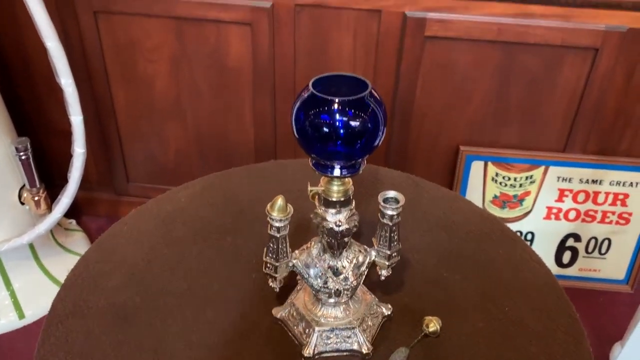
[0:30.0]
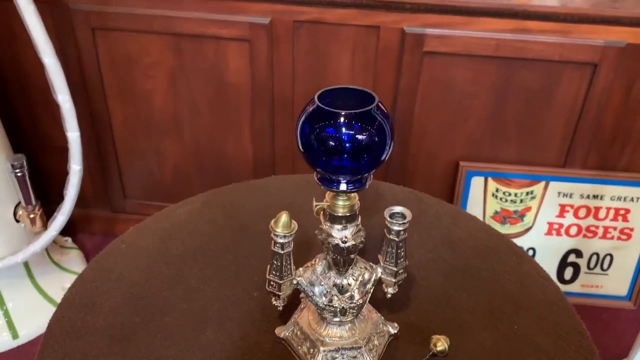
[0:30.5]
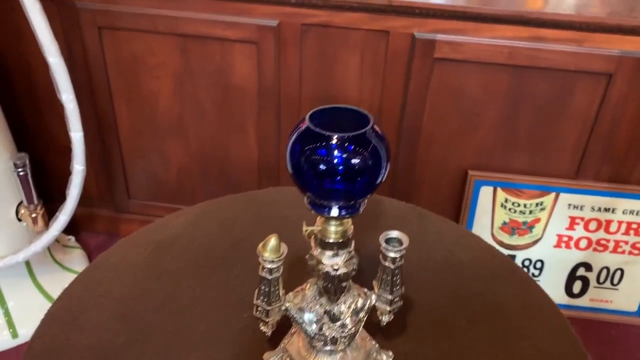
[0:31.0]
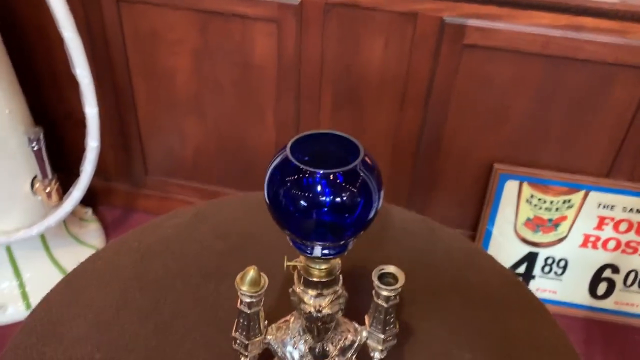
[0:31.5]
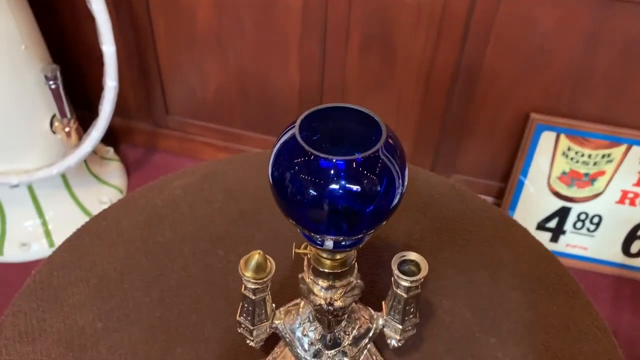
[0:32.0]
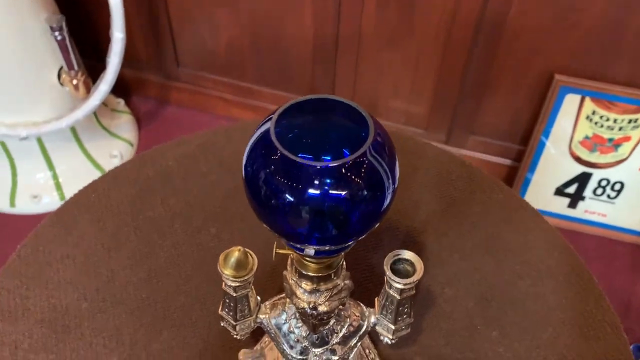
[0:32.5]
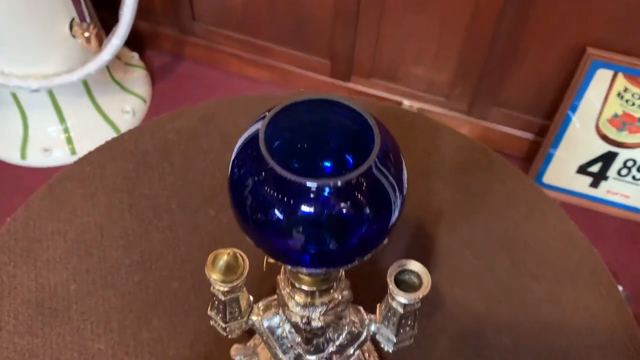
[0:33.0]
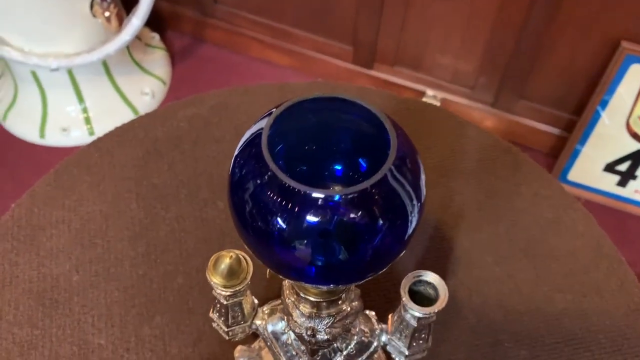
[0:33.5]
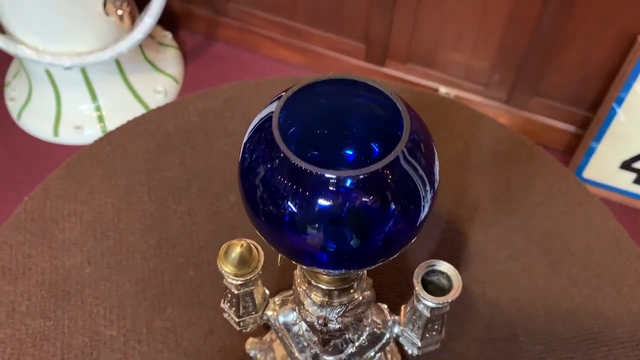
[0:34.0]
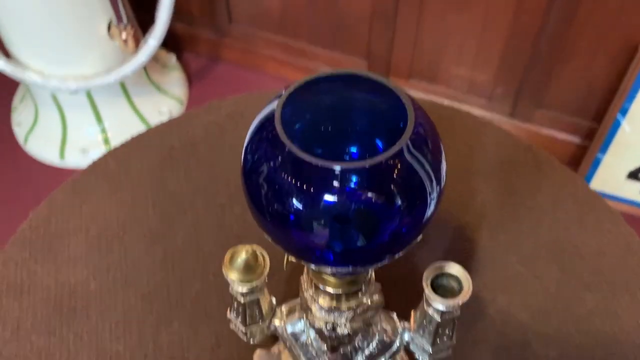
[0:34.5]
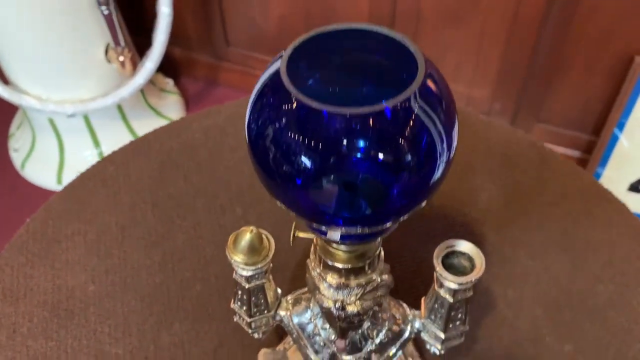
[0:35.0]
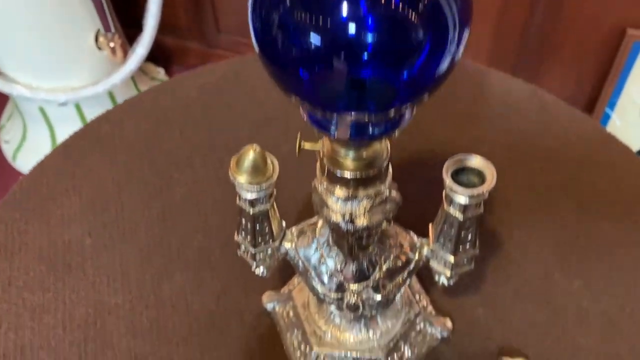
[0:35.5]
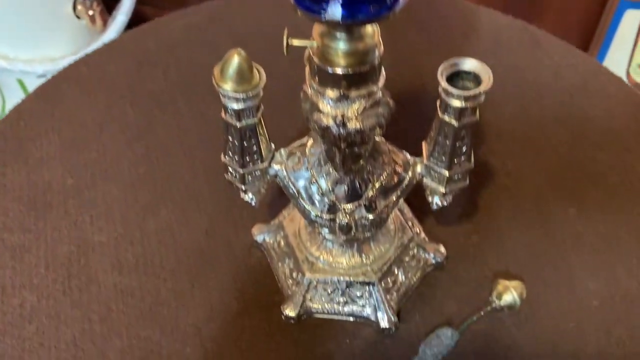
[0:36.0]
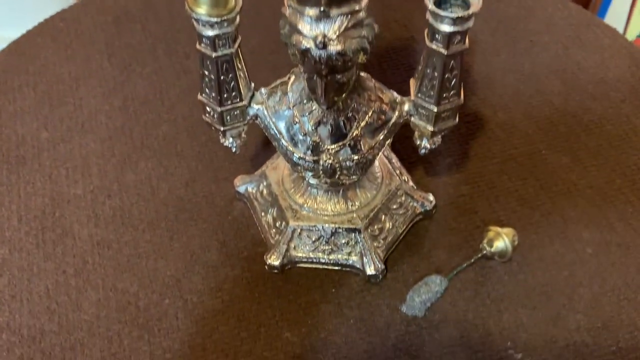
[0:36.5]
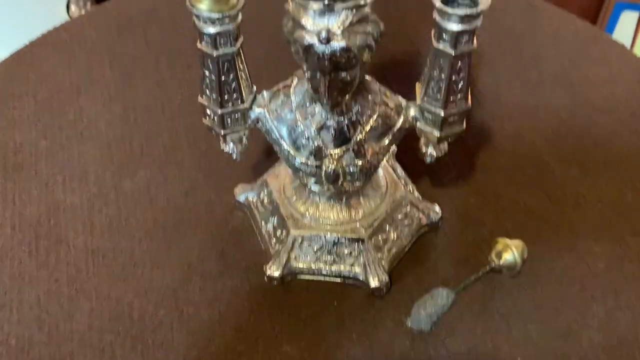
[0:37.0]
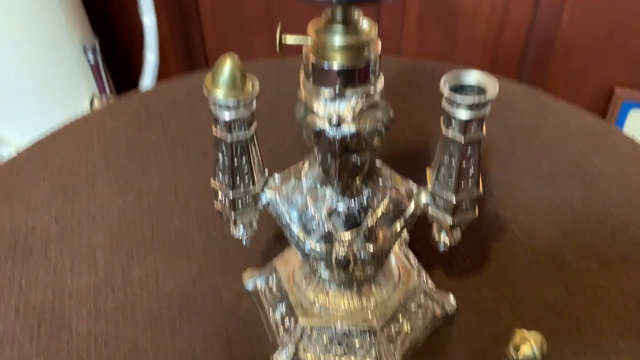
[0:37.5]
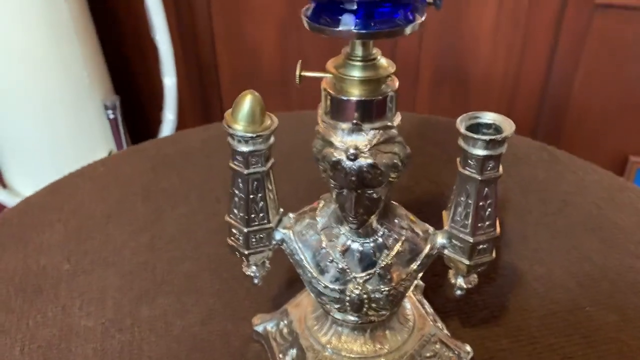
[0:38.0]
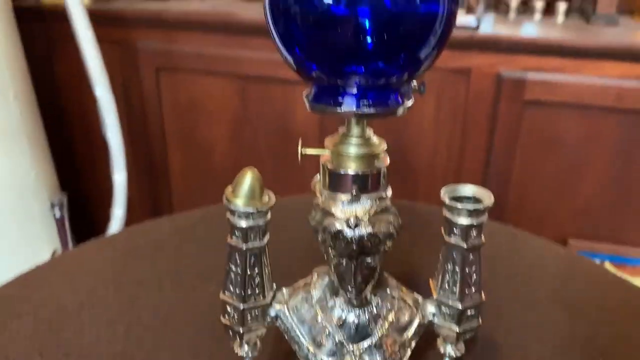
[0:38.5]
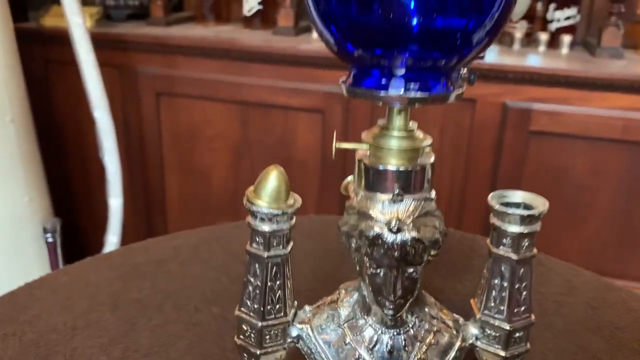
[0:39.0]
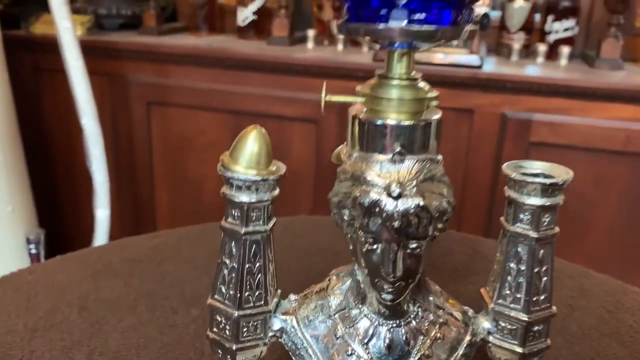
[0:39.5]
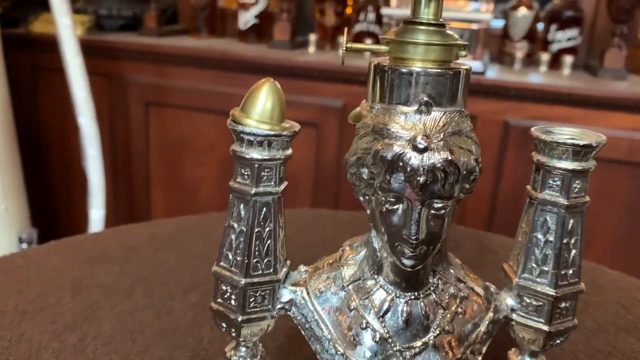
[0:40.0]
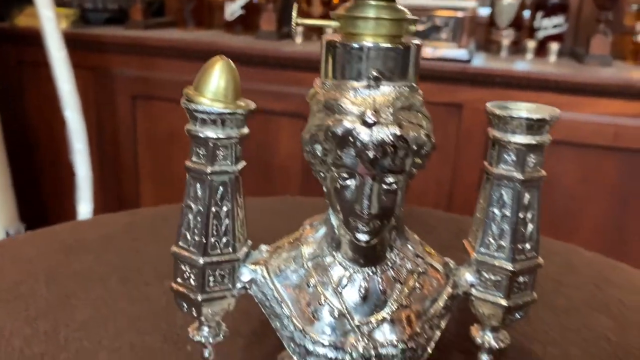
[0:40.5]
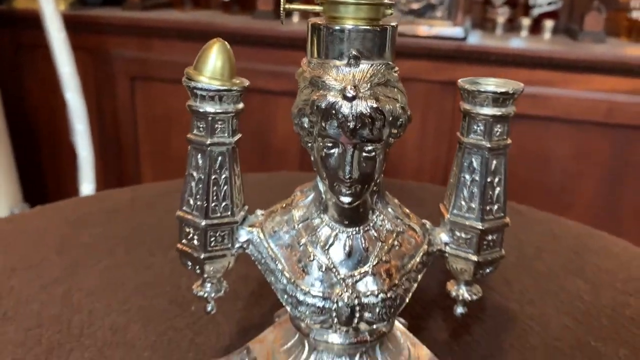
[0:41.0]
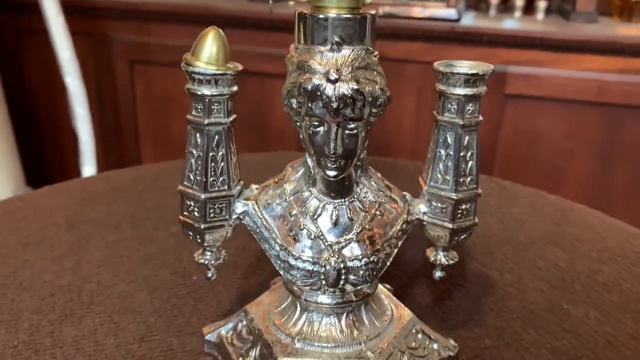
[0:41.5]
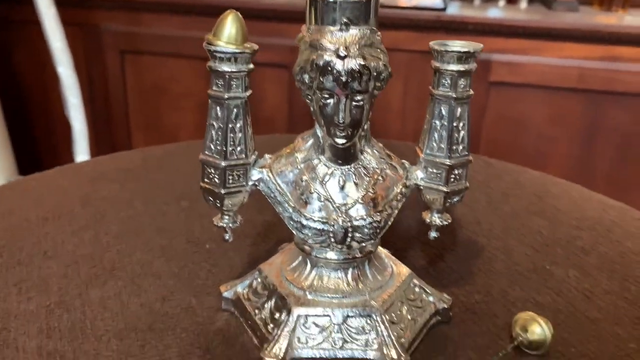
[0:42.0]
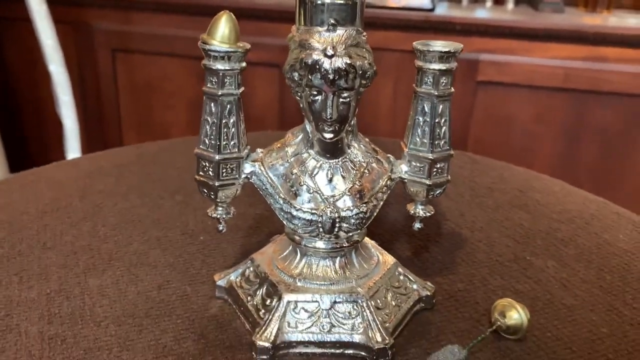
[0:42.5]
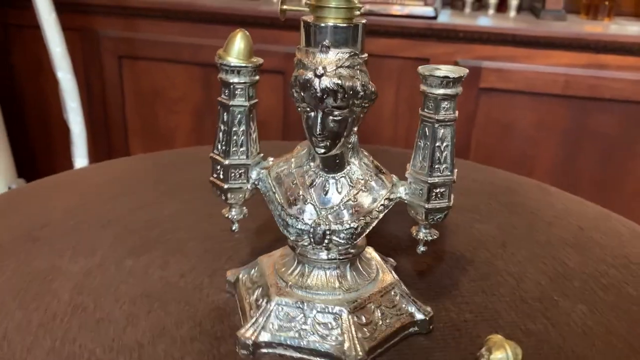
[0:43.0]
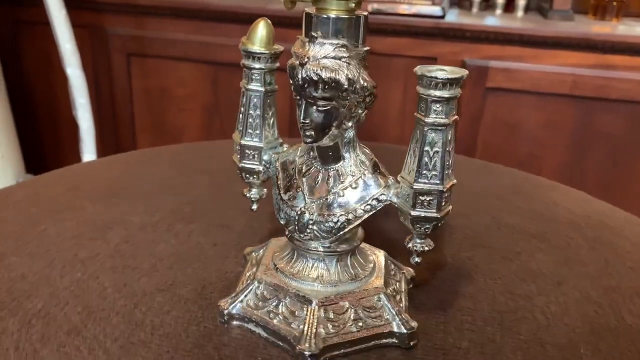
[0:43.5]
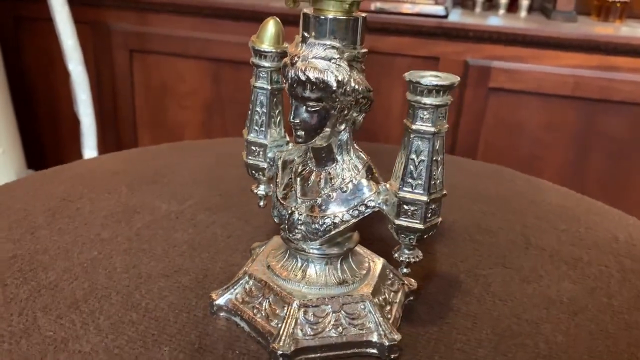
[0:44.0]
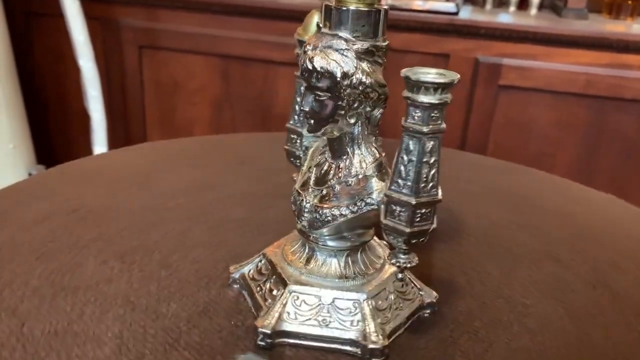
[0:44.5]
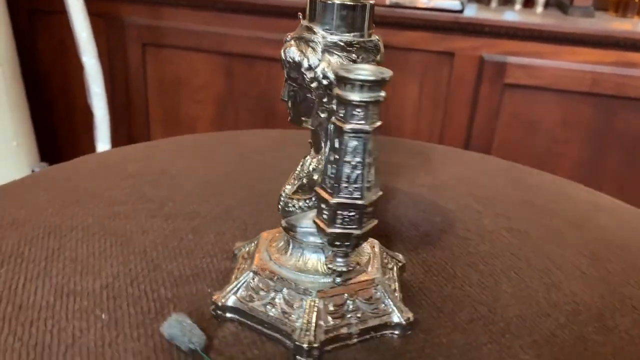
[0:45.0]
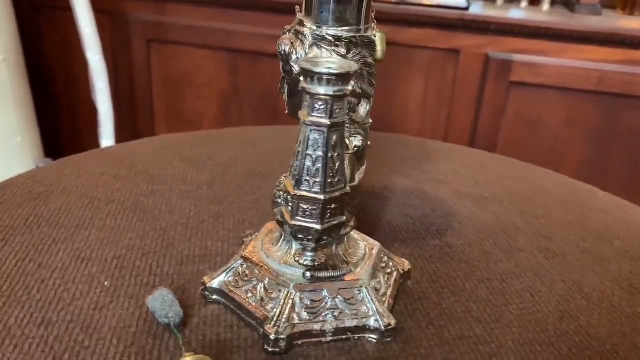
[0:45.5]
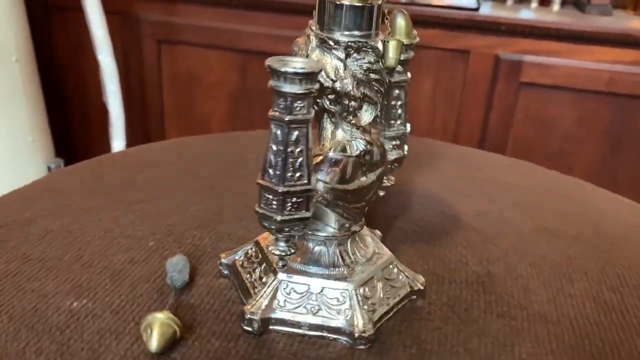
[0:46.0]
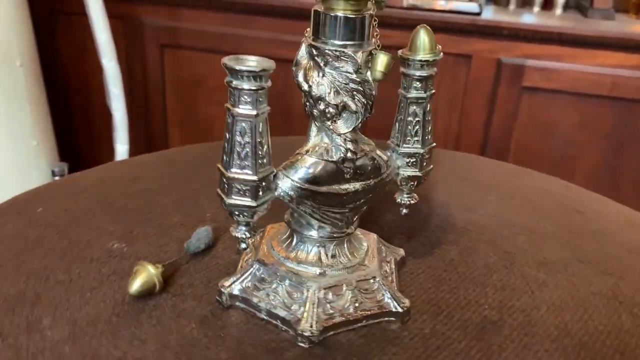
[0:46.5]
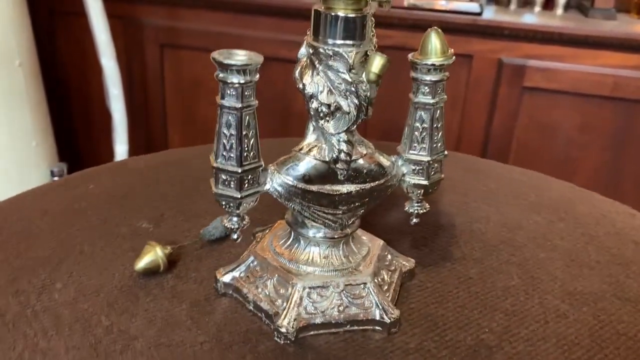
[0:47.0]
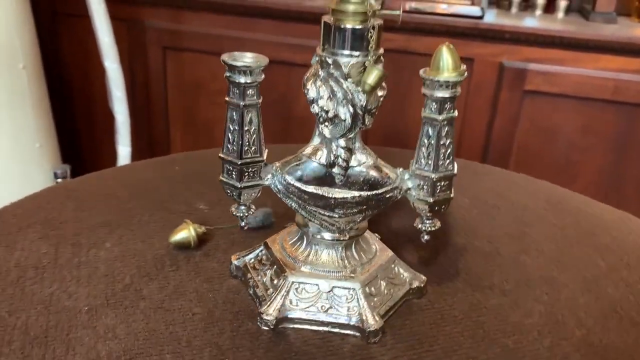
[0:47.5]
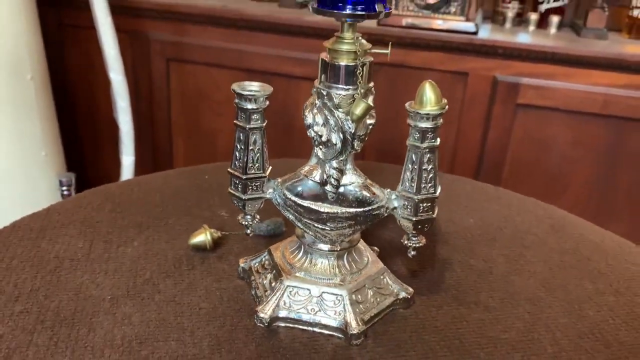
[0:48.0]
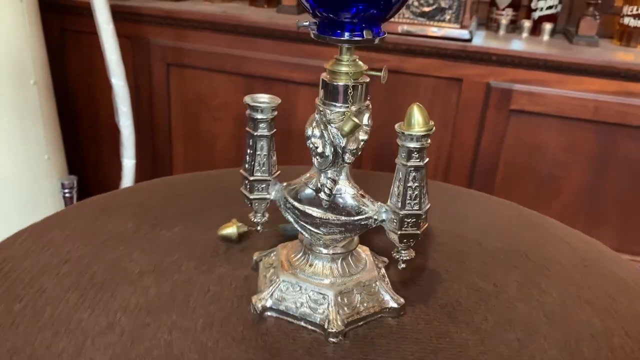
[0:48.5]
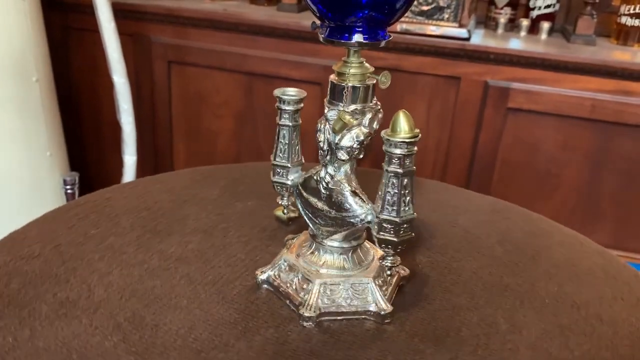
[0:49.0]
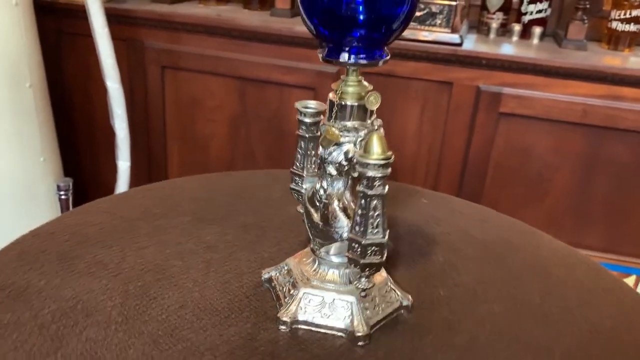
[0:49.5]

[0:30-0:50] A zoomed-in view shows the item on the small round brown table. Brown cabinets are in the back, with items on top that cannot quite be made out. The table spins around, giving a better view of the object, which appears to be some sort of hookah base. The Four Roses sign is still visible in the back right of the image, with $6 clearly visible and $4.89 to its left on the same poster. Some unidentified white objects are also present. The view zooms in on the item, and what appears to be some sort of lady figure is at its base.